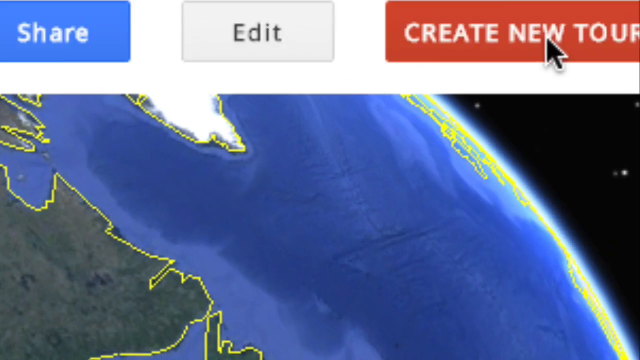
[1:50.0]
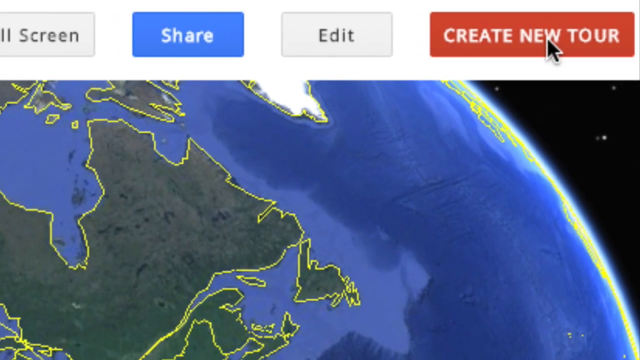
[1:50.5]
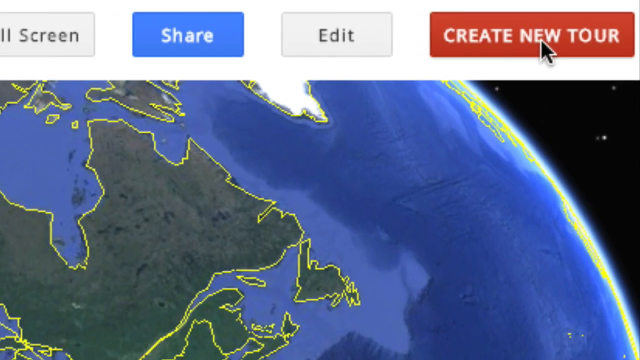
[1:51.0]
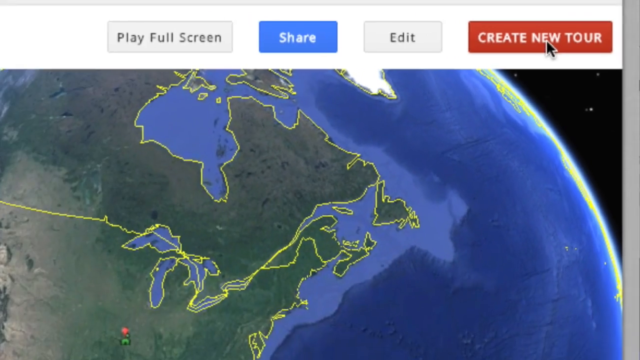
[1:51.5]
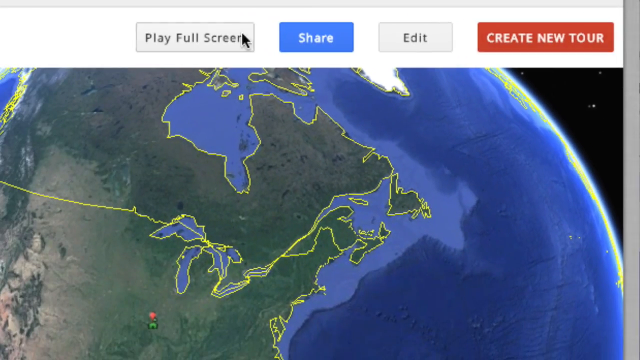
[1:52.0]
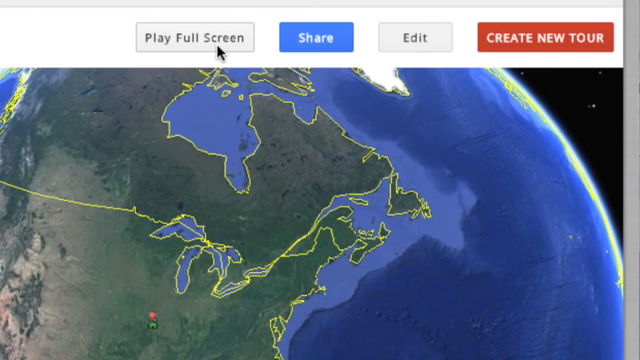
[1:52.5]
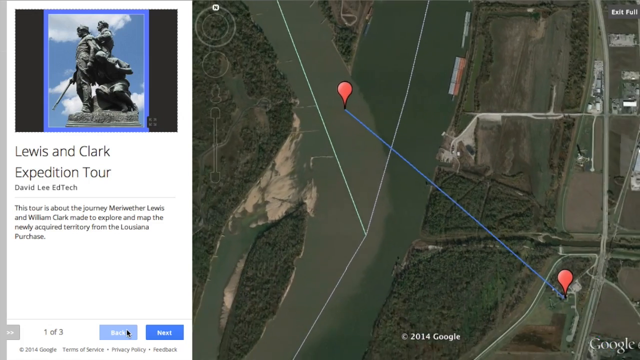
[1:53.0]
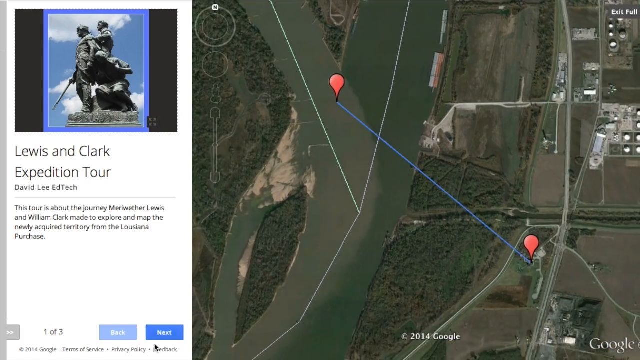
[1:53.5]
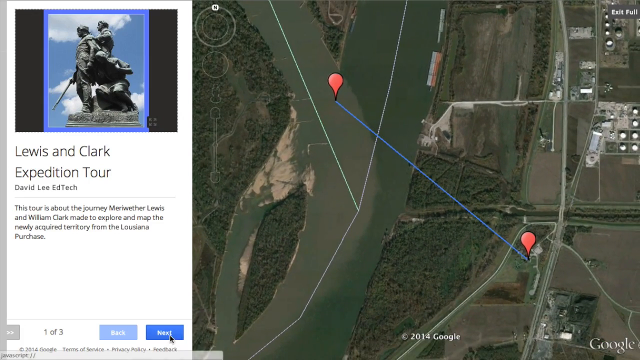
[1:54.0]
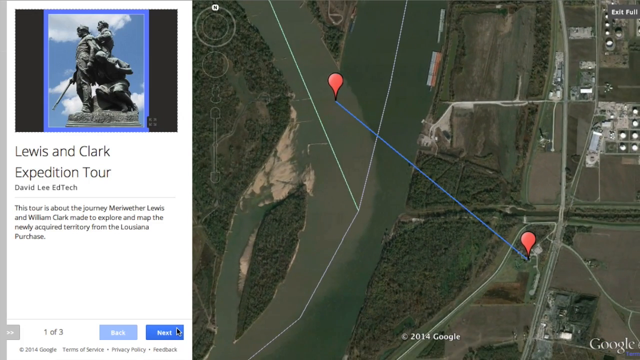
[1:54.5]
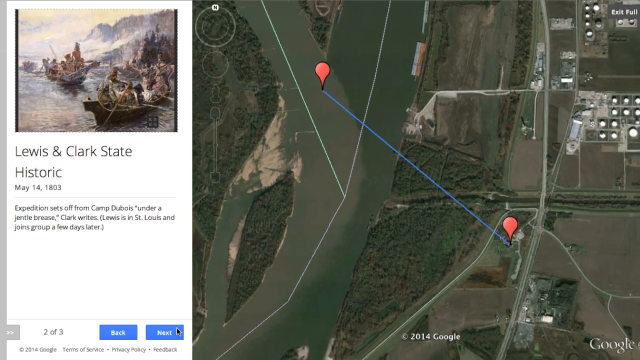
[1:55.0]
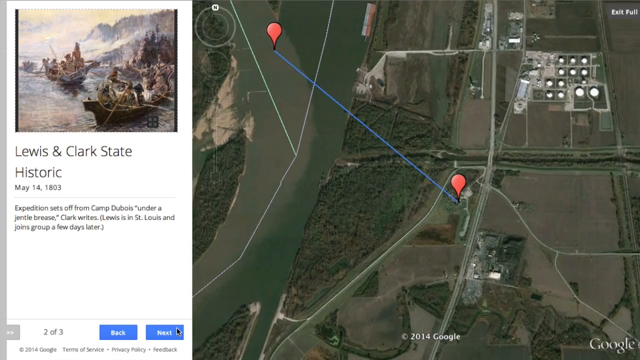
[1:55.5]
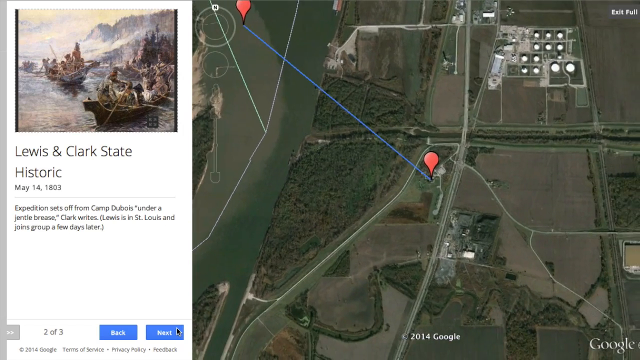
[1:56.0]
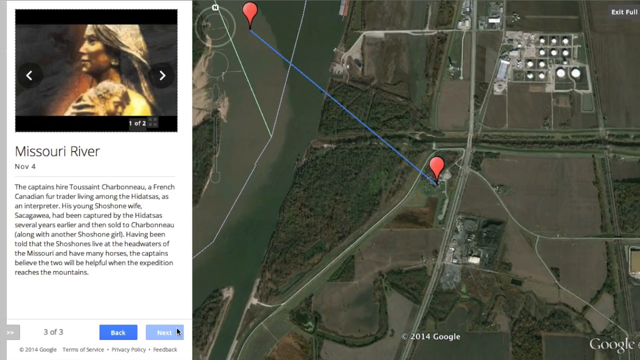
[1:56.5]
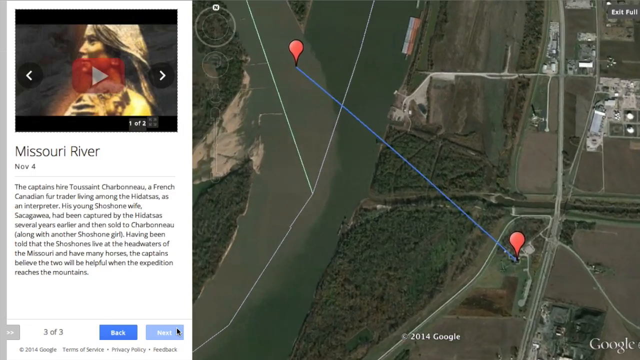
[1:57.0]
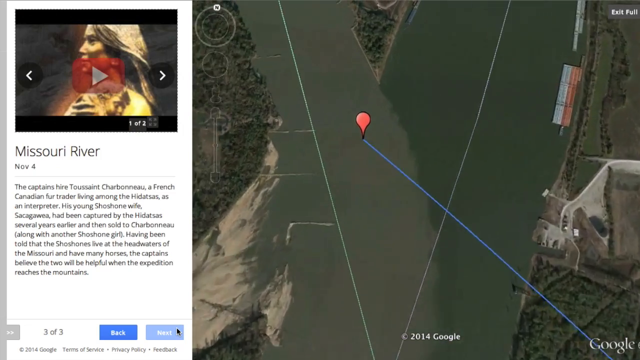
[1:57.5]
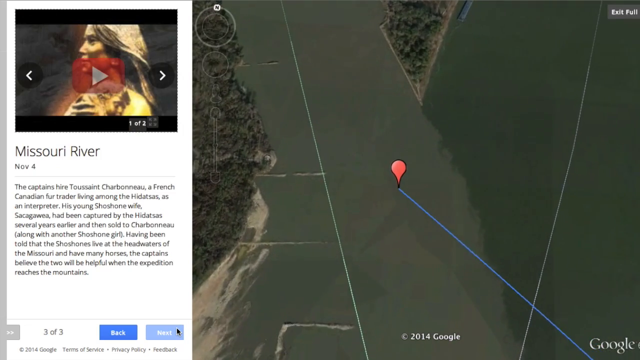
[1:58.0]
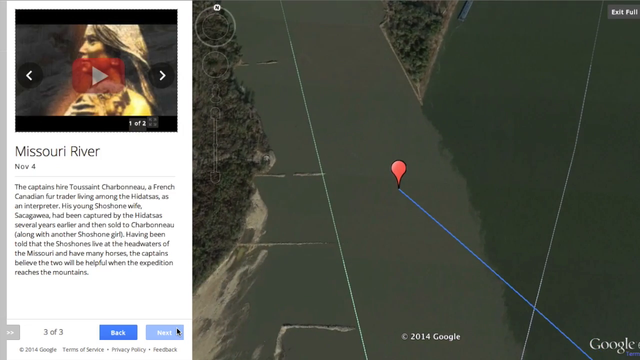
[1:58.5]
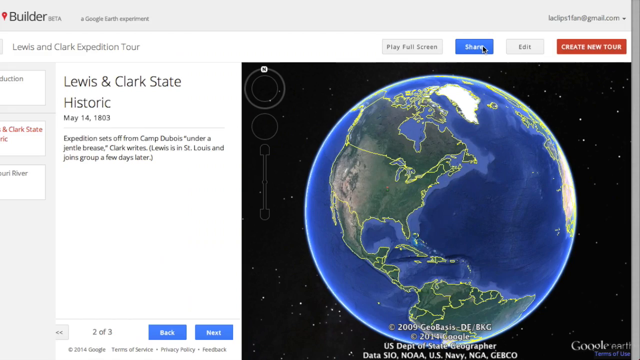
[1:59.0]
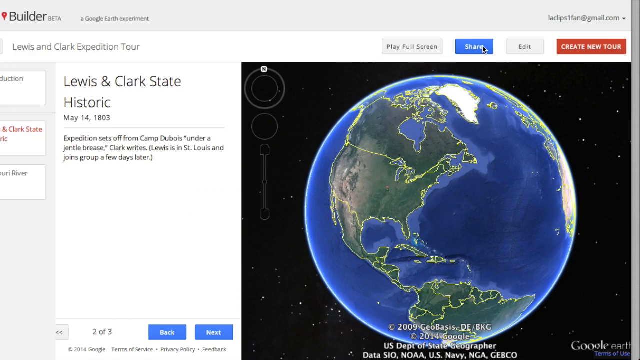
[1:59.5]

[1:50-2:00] After the button is clicked, it changes to "create new tour." The user moves the mouse to the left and clicks a button called "play full screen." The view sort of transitions to the statue picture seen earlier, with "Lewis and Clark expedition tour," the author David, and the short summary below it. On the right is sort of the path from the town in Illinois to the Missouri River, marked by just two red dots so far, making it a little hard to tell which is the start and which is the end point. Next is clicked, and it reads "Lewis and Clark State Historic," showing a picture of the men sort of on boats, with a description about setting off from Camp Du Bois, while the map sort of moves over to where Camp Du Bois was. The next button is clicked, showing the Missouri River with the guide video, and the map shows the Missouri River.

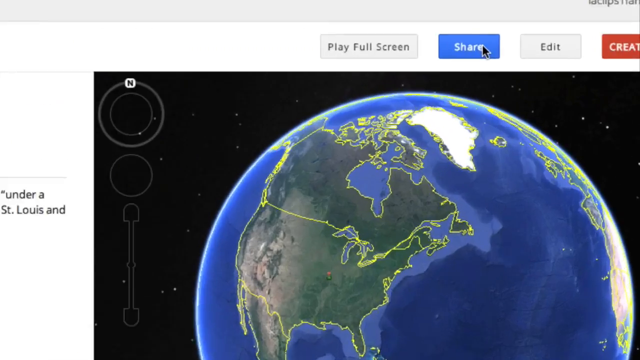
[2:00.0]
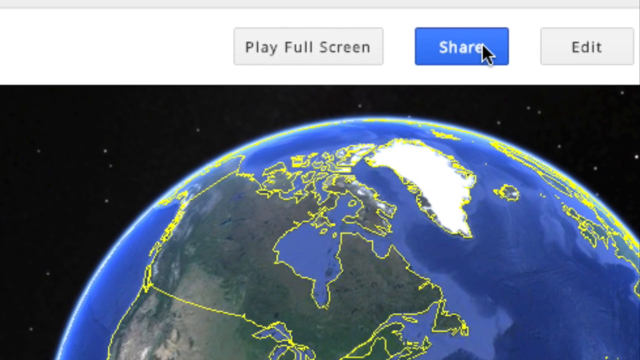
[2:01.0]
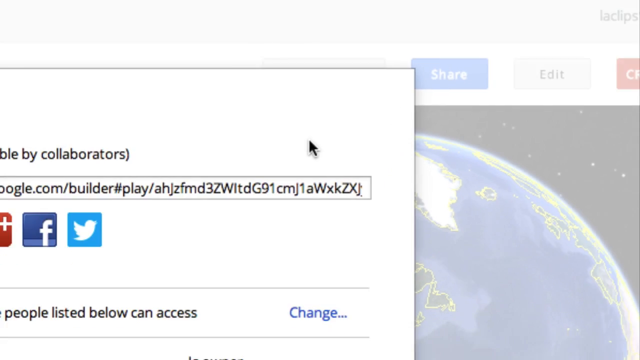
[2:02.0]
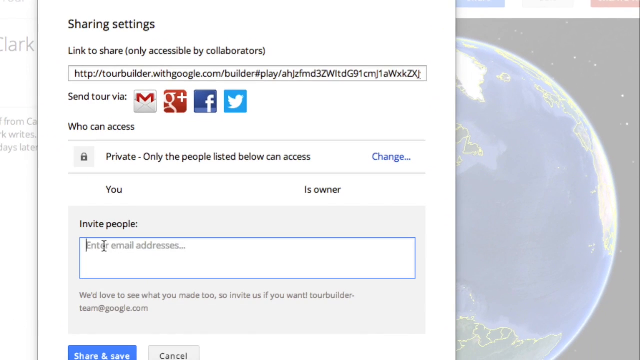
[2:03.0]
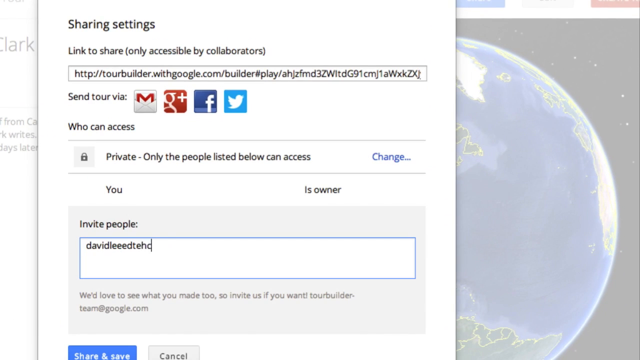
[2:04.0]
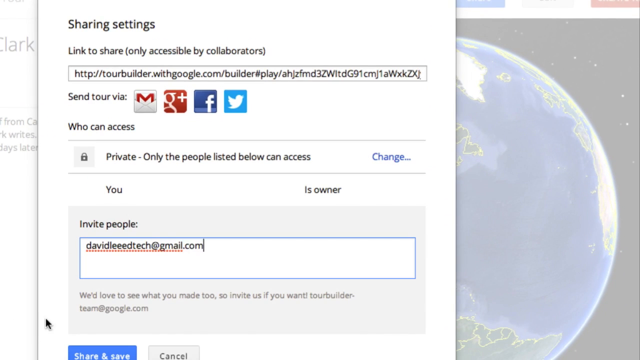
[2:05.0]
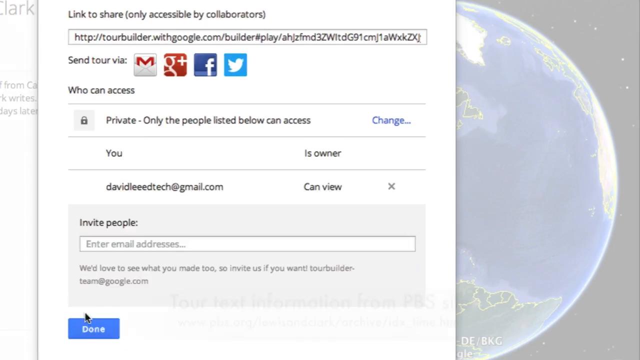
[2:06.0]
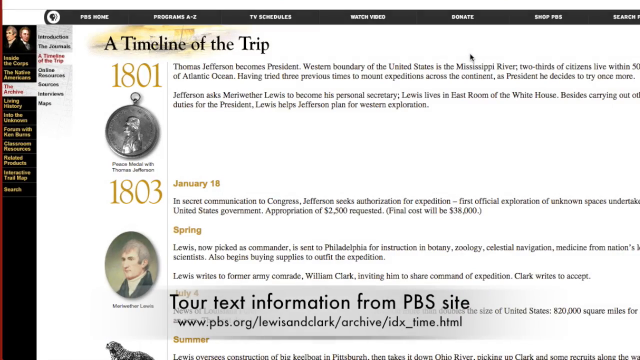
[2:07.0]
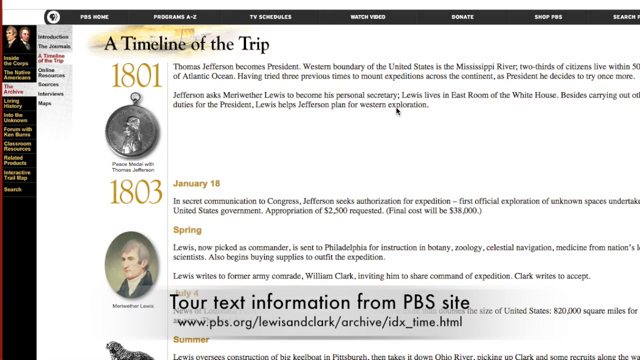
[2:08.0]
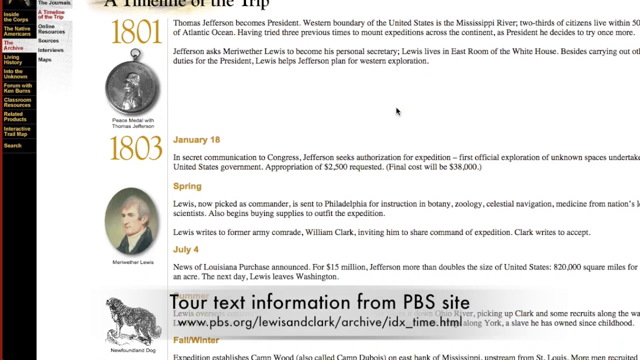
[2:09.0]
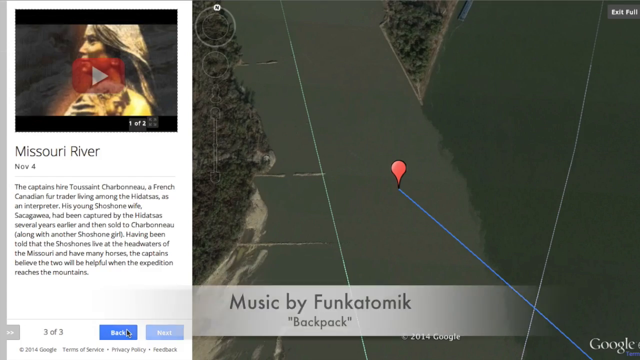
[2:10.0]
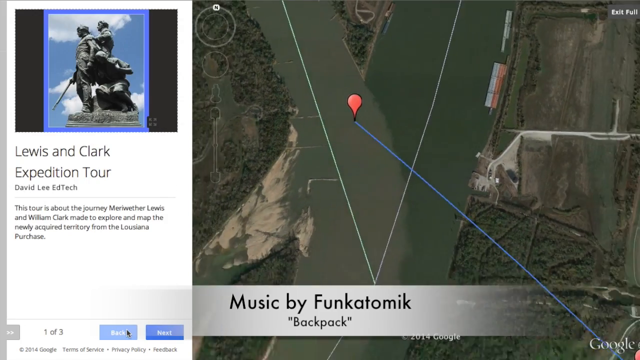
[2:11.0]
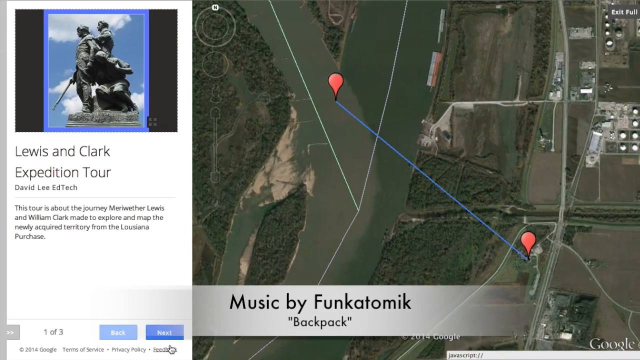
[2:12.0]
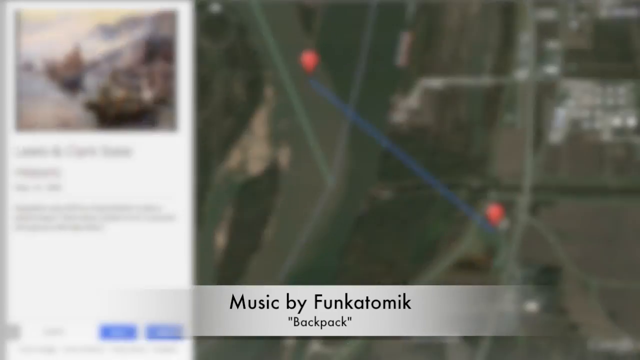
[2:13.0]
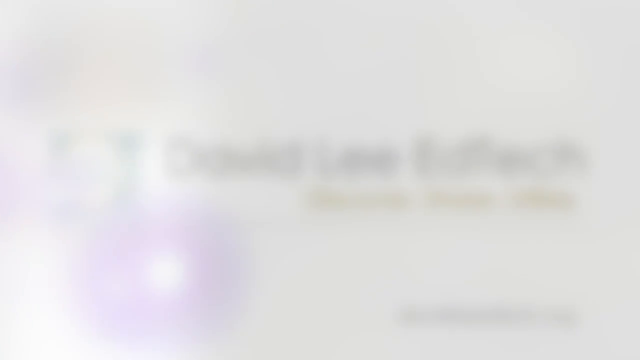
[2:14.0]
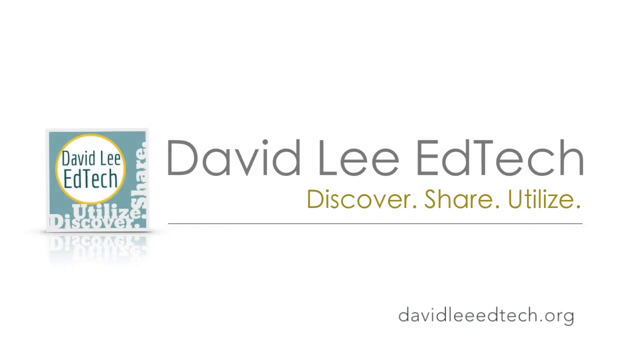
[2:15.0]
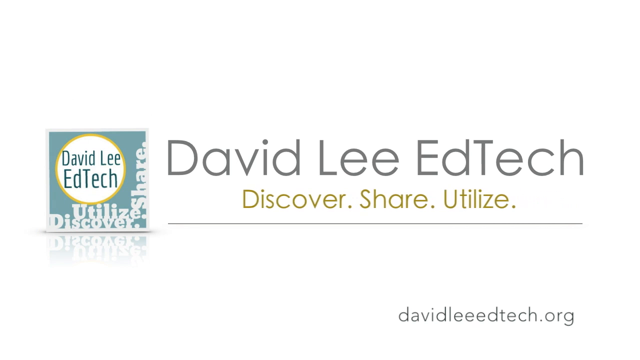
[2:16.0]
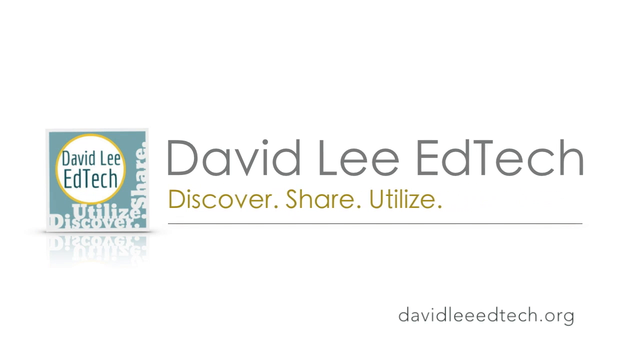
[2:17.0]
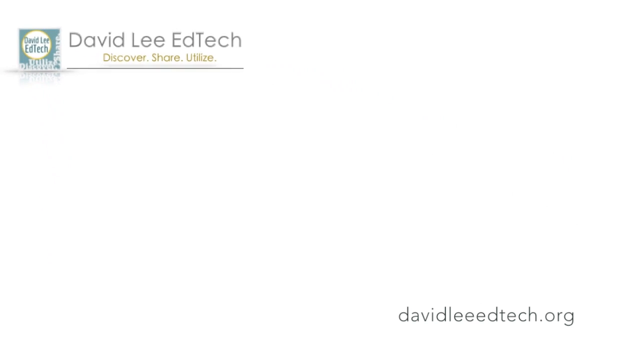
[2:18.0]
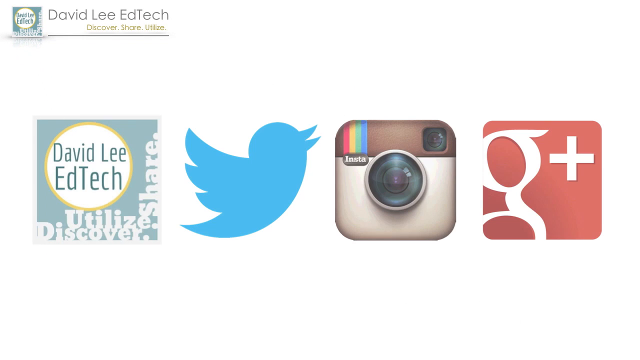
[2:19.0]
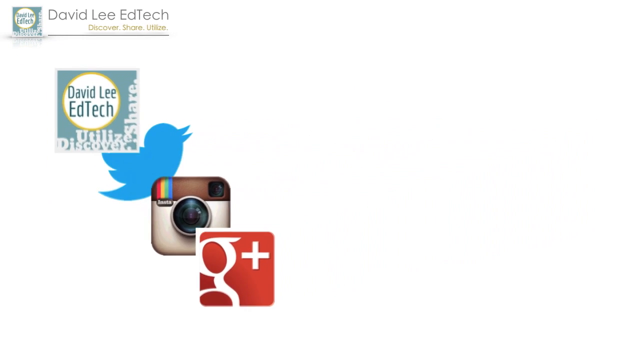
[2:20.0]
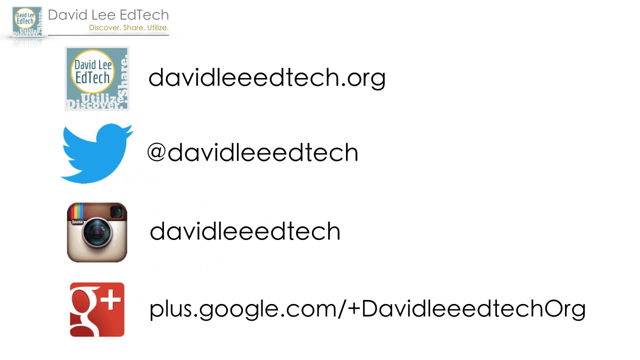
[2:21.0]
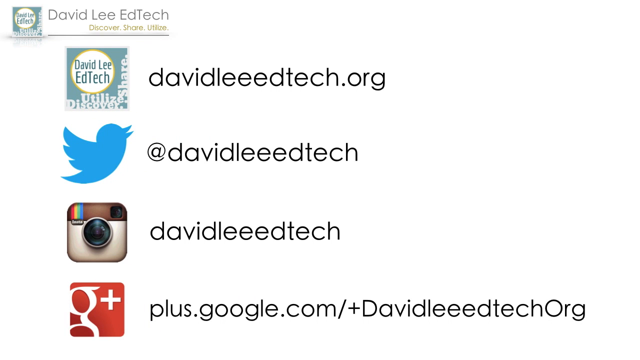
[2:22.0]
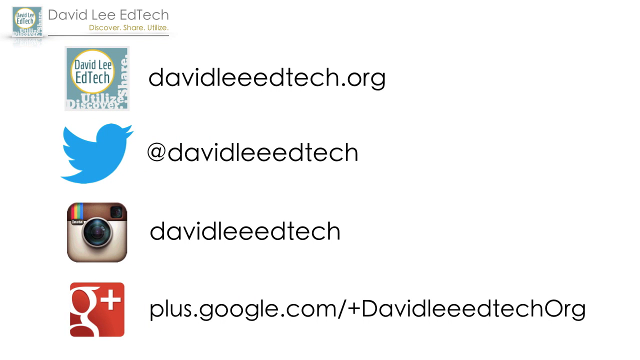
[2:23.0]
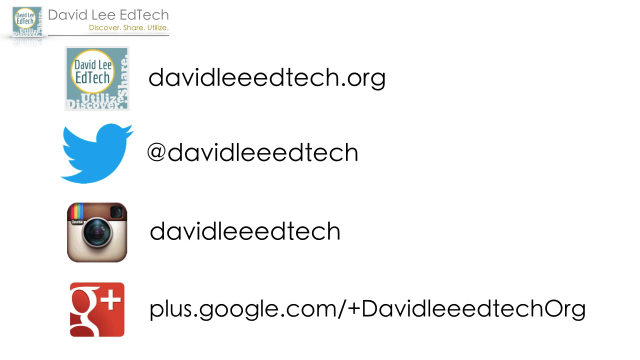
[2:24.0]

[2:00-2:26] The user zooms in and clicks a blue share button, which brings up a pop-up menu reading "share settings," "link to share" and "only accessible by collaborators," along with the share link. Share options are listed for Gmail, Google Plus, Facebook and Twitter. Below that, under "who can access," it reads "private, only the people listed below can access," with a blue "change" button to the right. The current person is shown as "you," the owner. Below that is an option to invite people; the user types in the email "davidleetech@gmail.com" and clicks "share and save." After sort of a fade, a new gray bar at the bottom reads "tour text information from PBS site," and a PBS site for the Lewis and Clark expedition appears. The top says "a timeline of the trip from 1801," followed by a description about Thomas Jefferson becoming president, then "1803, a secret committee authorizes this expedition." Scrolling down reveals more information. The view then goes back to the start of the tour, and a gray bar at the bottom reads "music by Funka Tomek" with the song name "Backpack." It fades out to white, and a final slide reads "David Lee EdTech Discover, Share, Utilize," with his name in a square on the left and the website "davidetech.org" below. It switches one more time to show his main website, his Twitter, his Instagram and his Google Plus accounts.